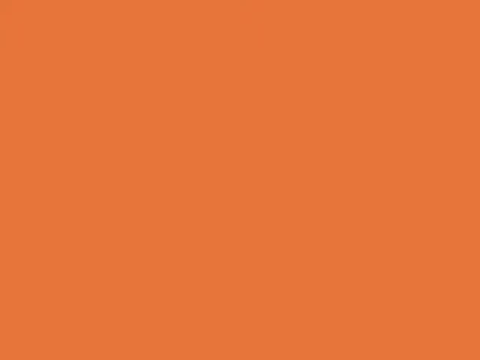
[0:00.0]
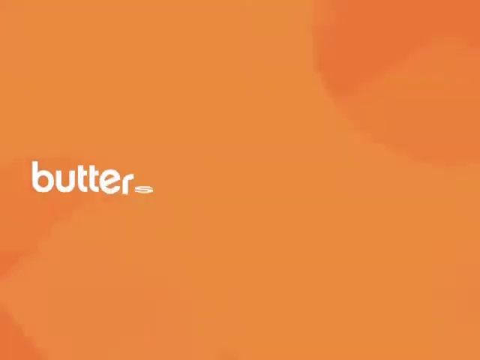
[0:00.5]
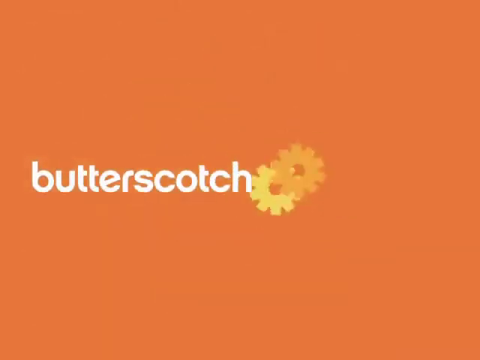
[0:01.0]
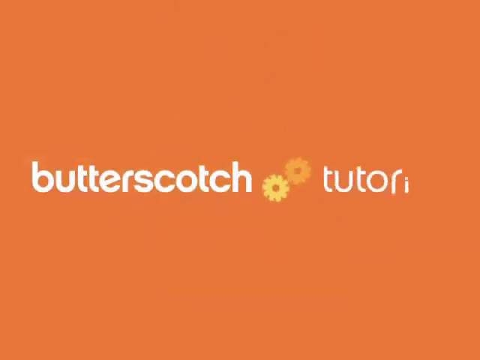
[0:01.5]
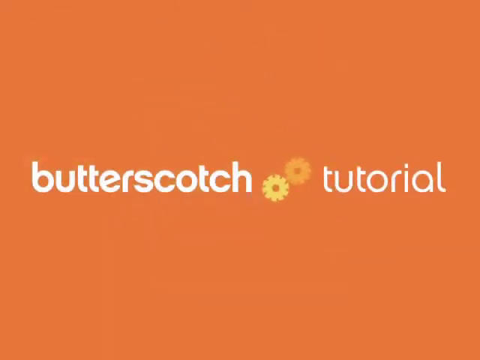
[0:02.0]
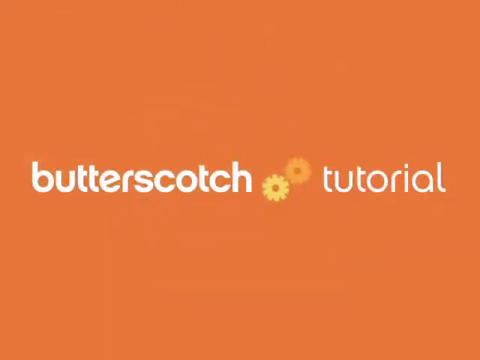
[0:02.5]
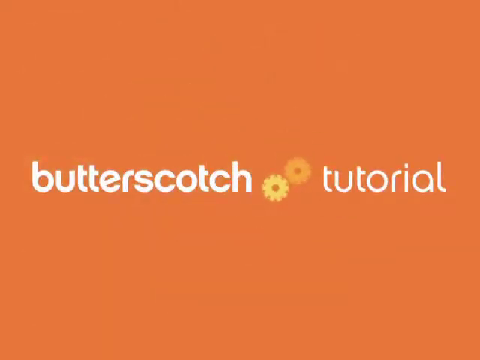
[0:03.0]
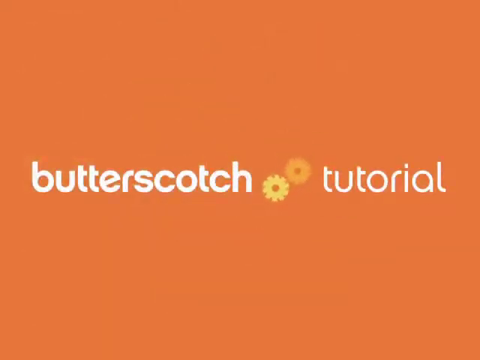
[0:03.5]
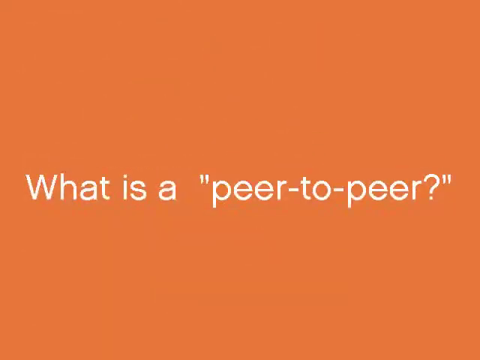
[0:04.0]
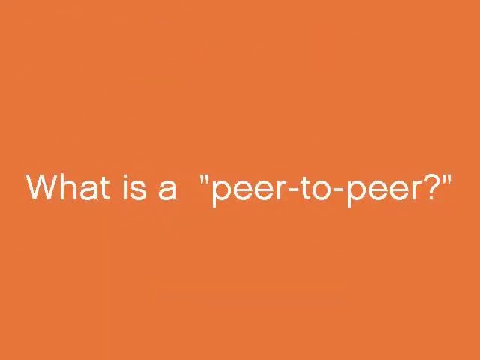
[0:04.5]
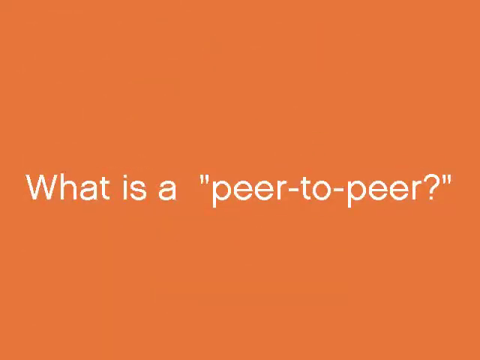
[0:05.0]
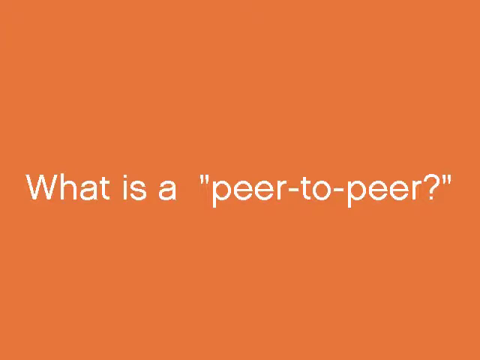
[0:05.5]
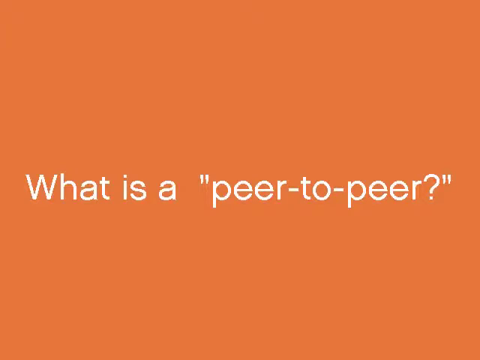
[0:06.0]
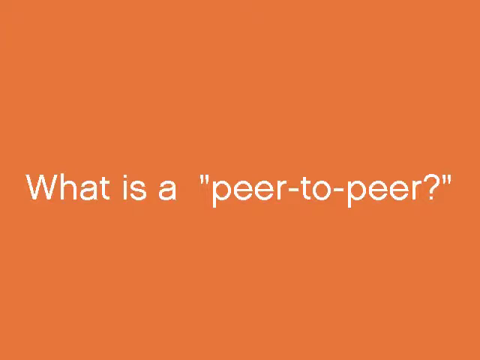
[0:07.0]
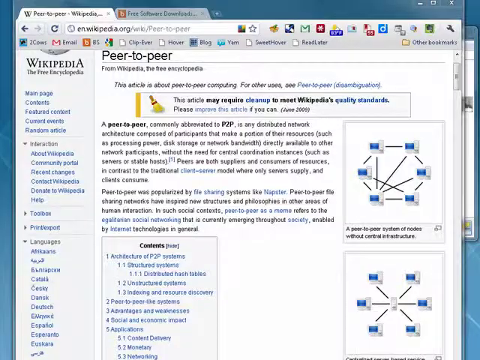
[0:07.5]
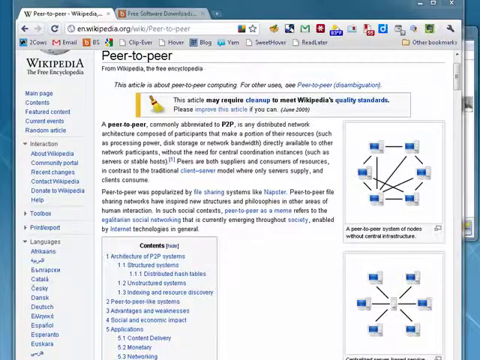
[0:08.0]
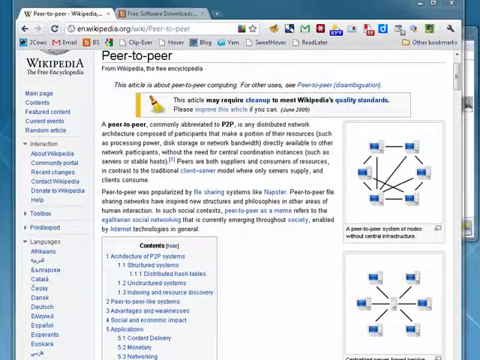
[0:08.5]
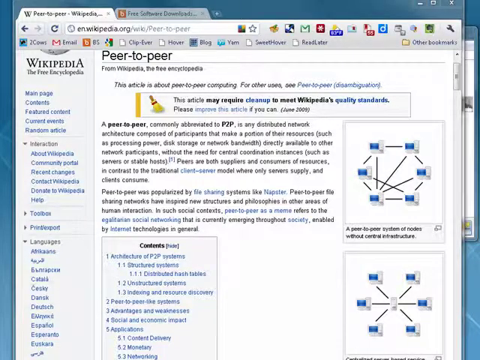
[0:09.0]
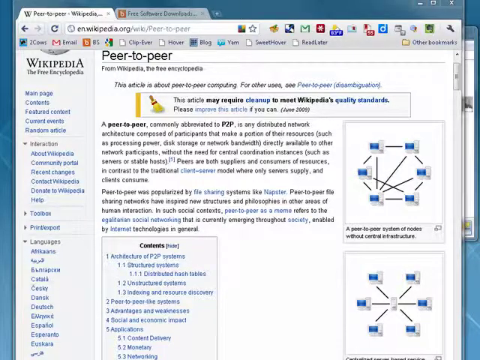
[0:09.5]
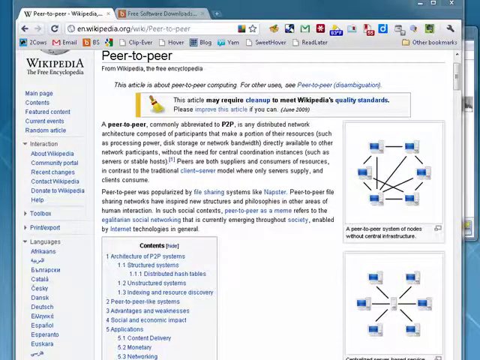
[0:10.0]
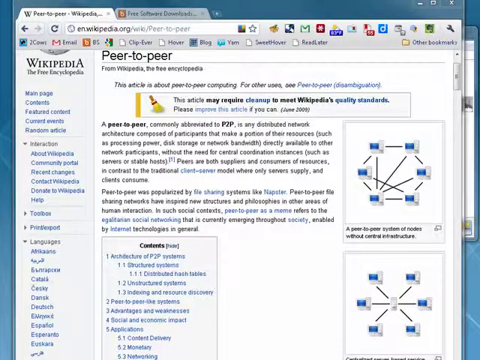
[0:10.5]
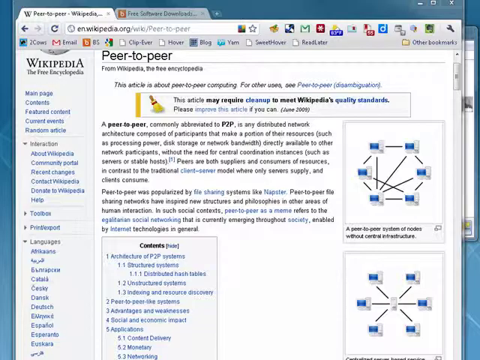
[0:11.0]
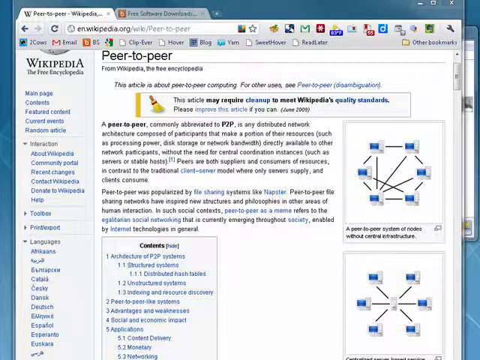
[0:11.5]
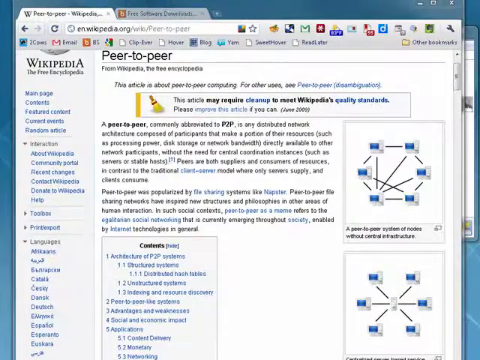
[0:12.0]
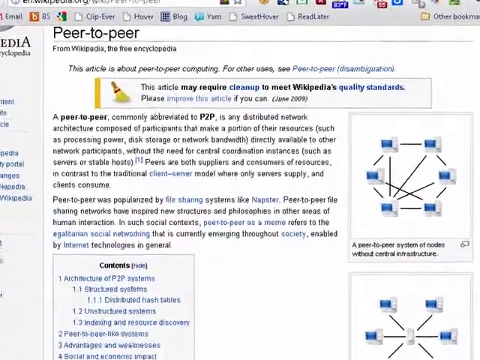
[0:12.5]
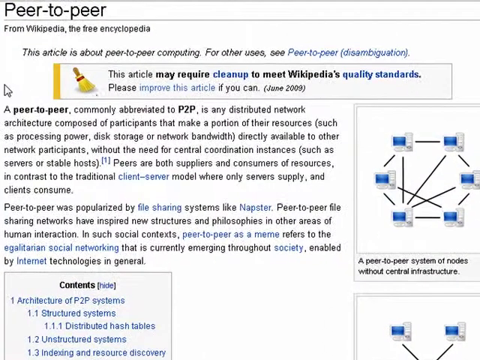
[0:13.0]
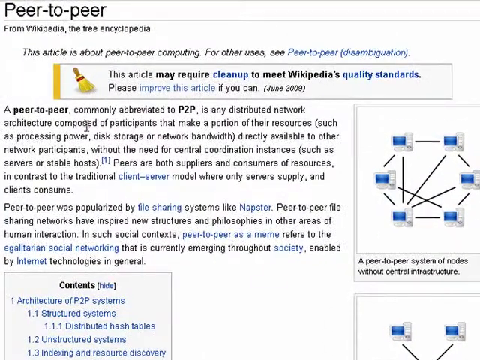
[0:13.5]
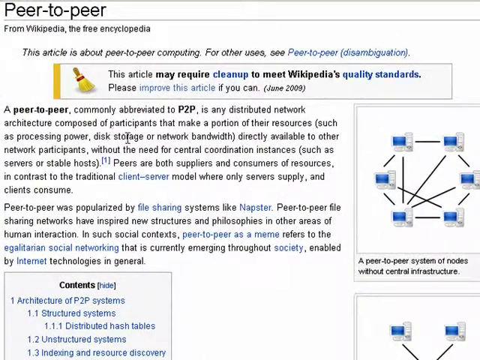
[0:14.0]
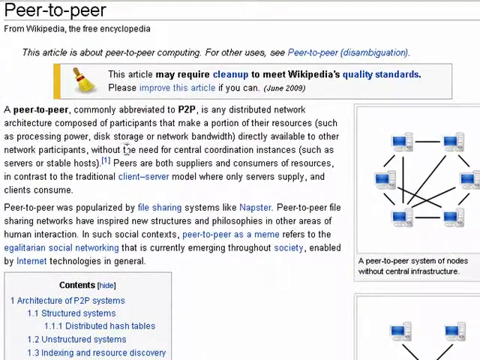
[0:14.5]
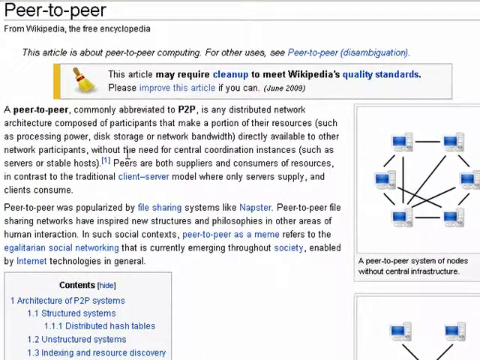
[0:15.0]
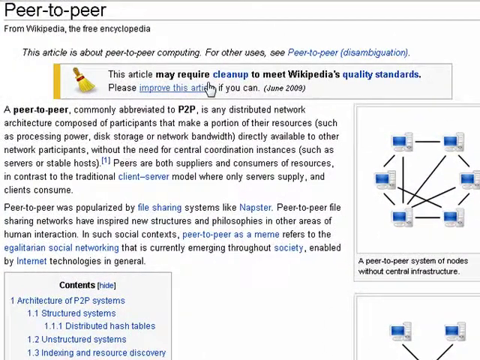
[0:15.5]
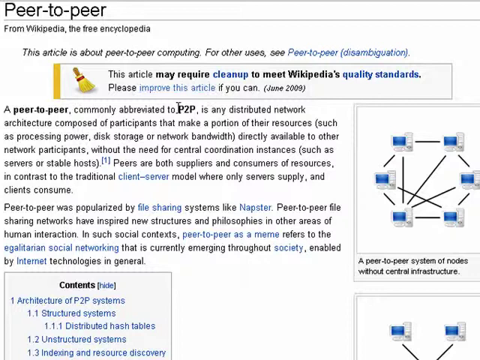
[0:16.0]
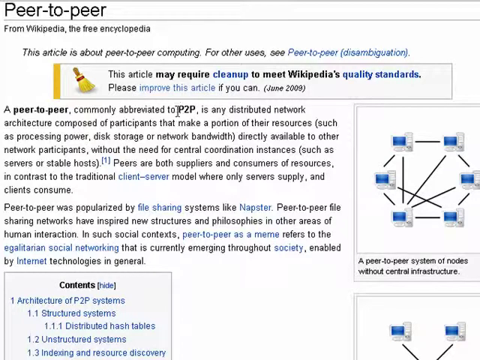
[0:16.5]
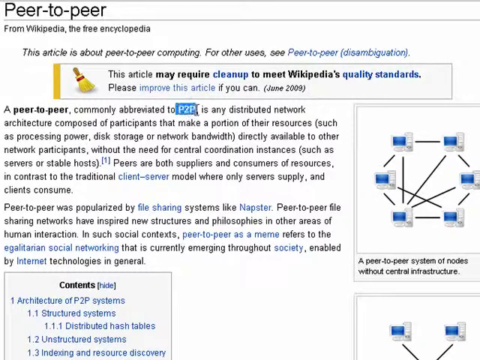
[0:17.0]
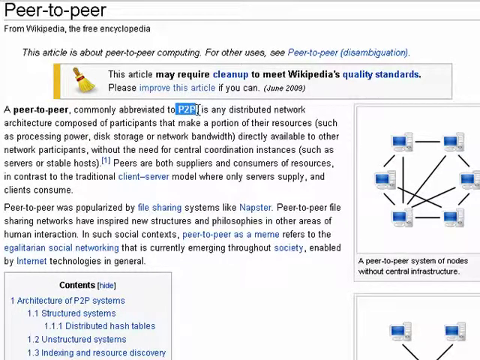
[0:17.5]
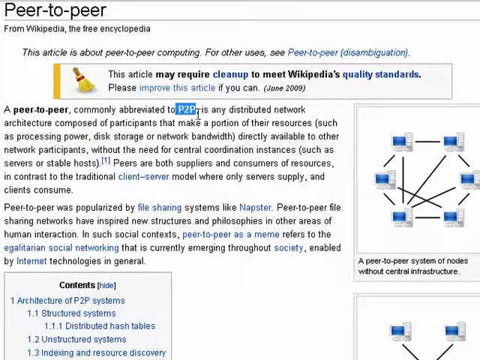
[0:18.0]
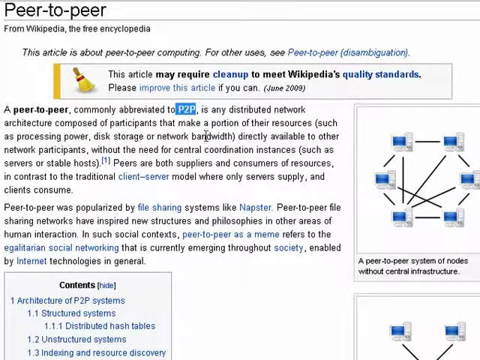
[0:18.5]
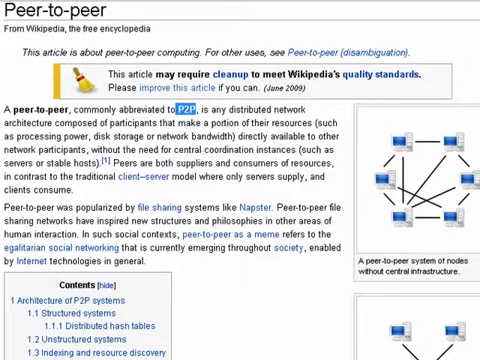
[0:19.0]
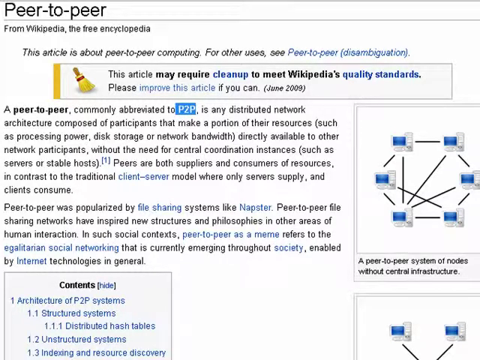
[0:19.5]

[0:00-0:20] The video opens on a plain, solid orange screen where the words "butterscotch tutorial" appear, followed by a message beginning "what is peer-to-peer", all in white writing. The image then changes to open tabs on a desktop, apparently with a Wikipedia tab open to the page on the peer-to-peer transfer protocol and how it works. The author marks the places on the page where the abbreviations are listed.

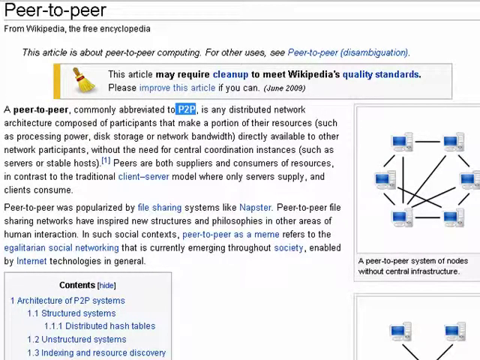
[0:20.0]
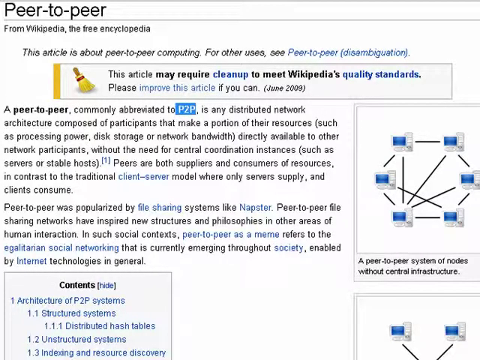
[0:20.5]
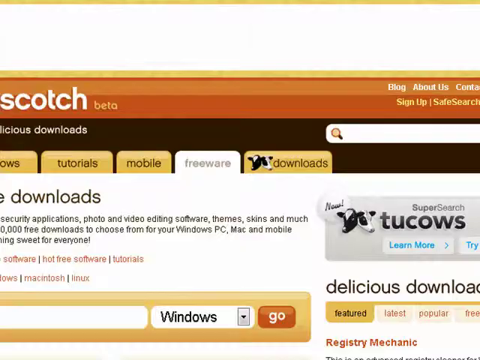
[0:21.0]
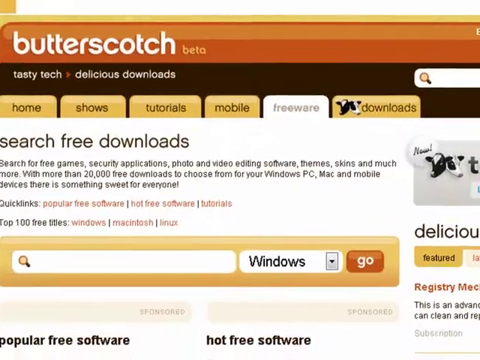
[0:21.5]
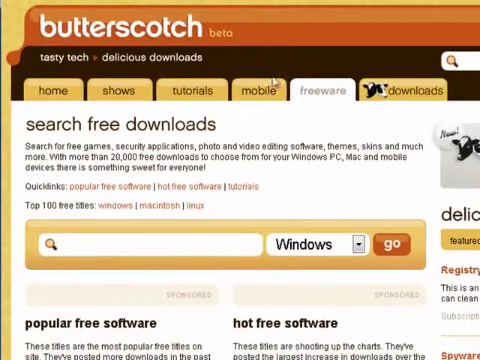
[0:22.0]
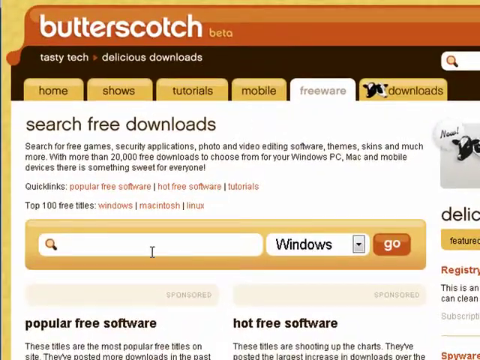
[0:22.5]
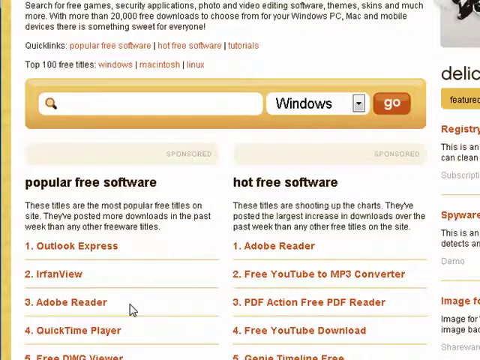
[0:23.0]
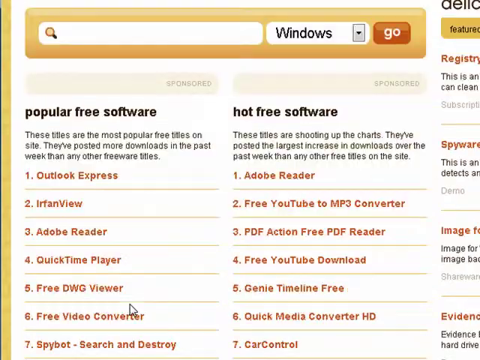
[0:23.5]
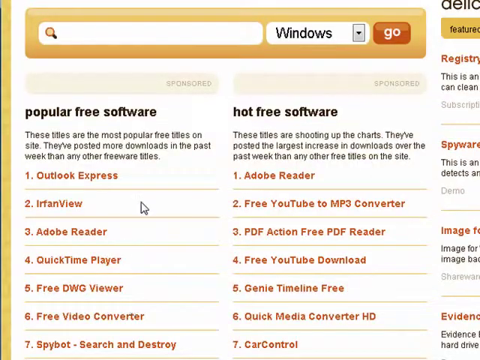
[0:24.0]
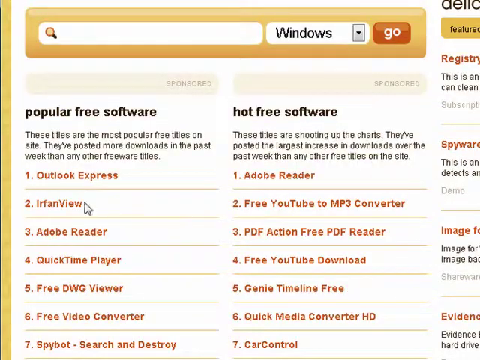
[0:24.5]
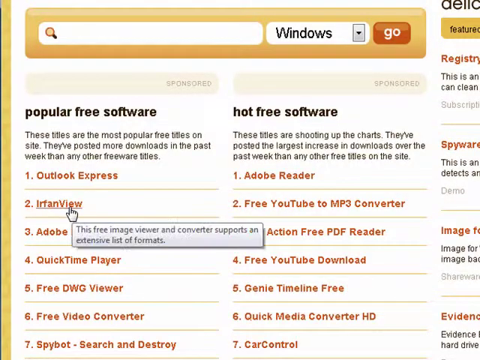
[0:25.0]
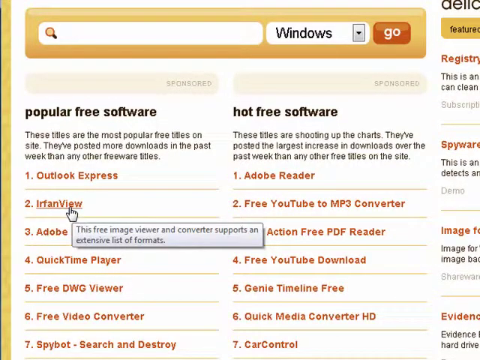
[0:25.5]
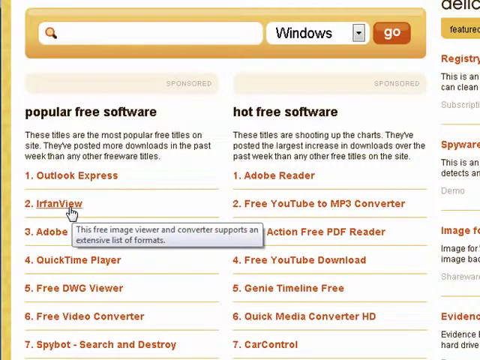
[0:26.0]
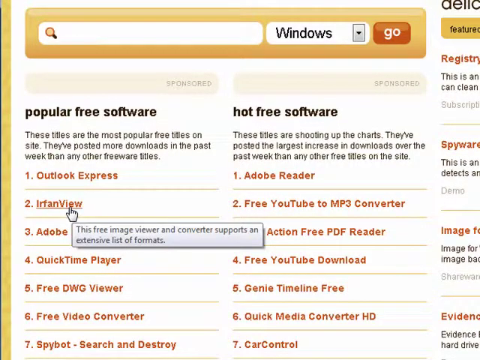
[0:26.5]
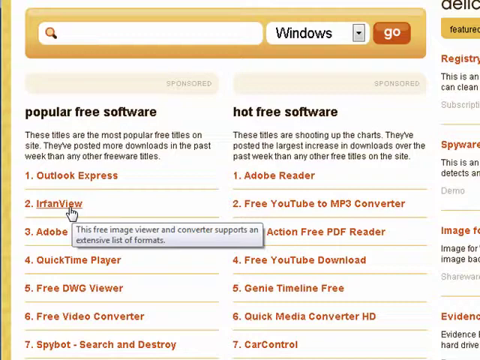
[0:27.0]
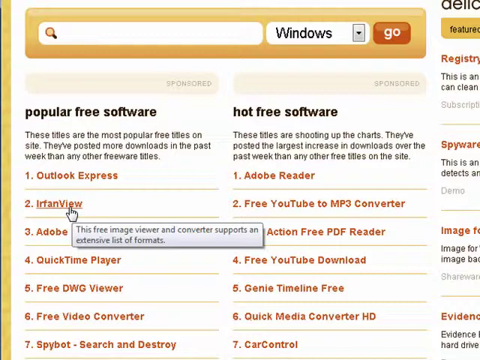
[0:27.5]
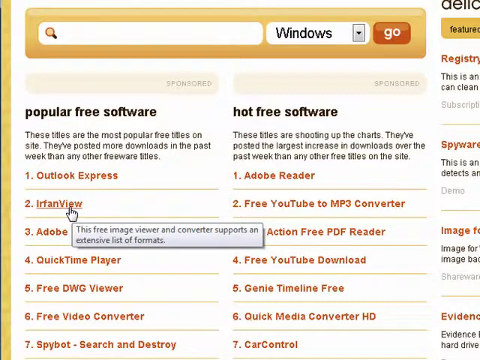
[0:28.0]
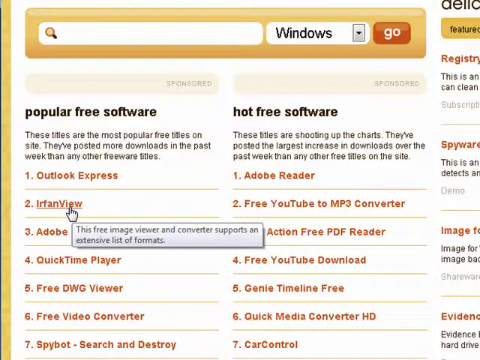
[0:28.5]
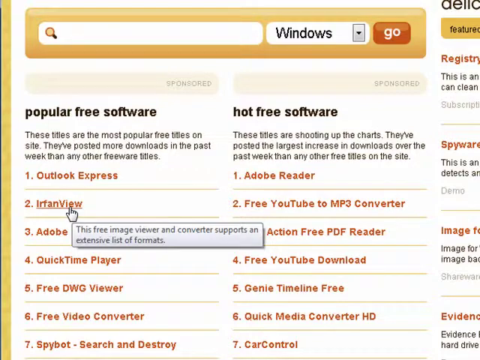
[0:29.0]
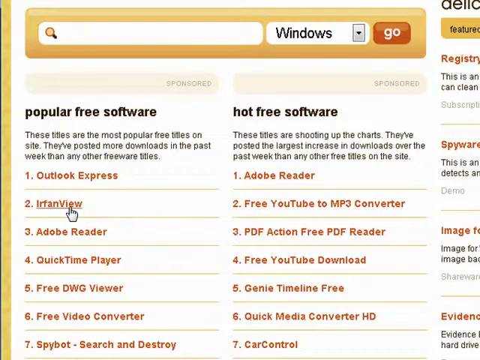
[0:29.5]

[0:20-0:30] The Wikipedia page for peer-to-peer is shown, with a message at the top saying the article may require cleanup to meet Wikipedia's quality standards. The author has already highlighted "P2P", representing the peer-to-peer protocol. He then switches to a page for searching free downloads with Butterscotch Beta and scrolls down to "Popular Free Software", which lists the most popular free titles on the site: Outlook Express, IrfanView, Adobe Reader, QuickTime Player, Free DWG Viewer, and Free Video Converter. He clicks on IrfanView, which is described as a free image viewer and converter.